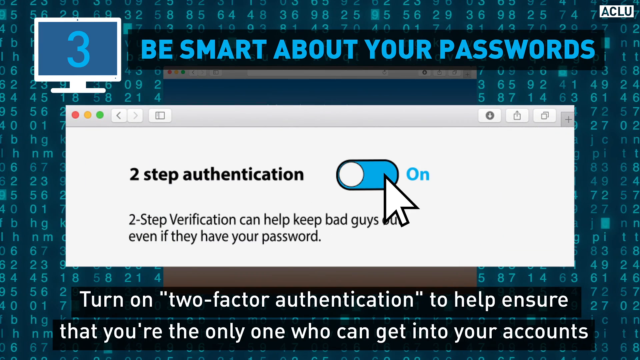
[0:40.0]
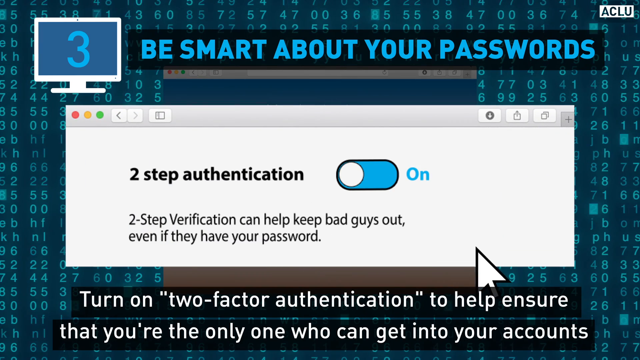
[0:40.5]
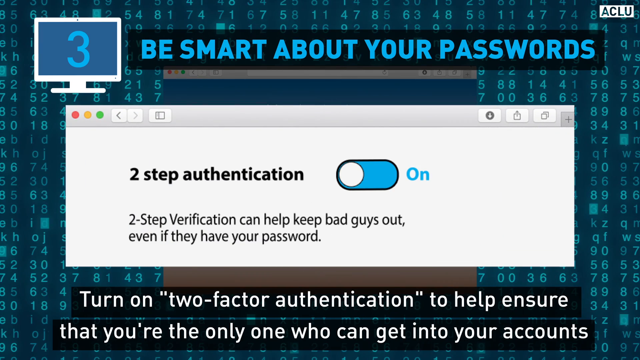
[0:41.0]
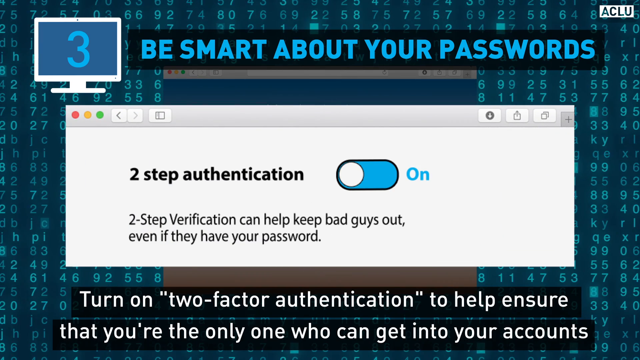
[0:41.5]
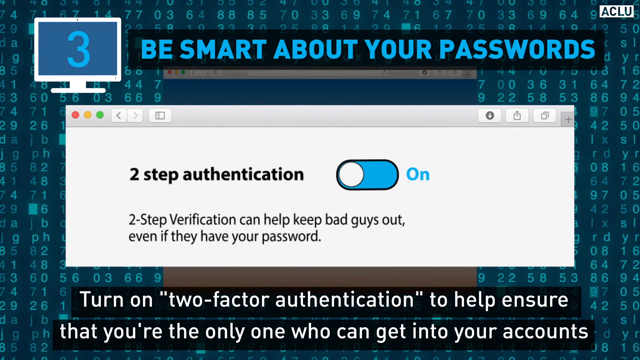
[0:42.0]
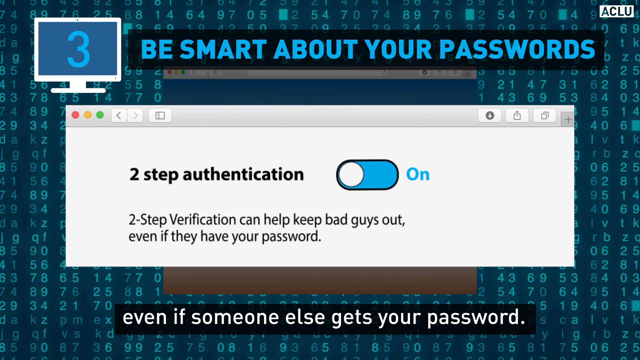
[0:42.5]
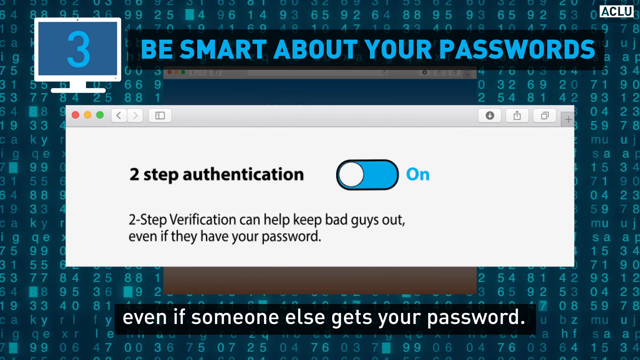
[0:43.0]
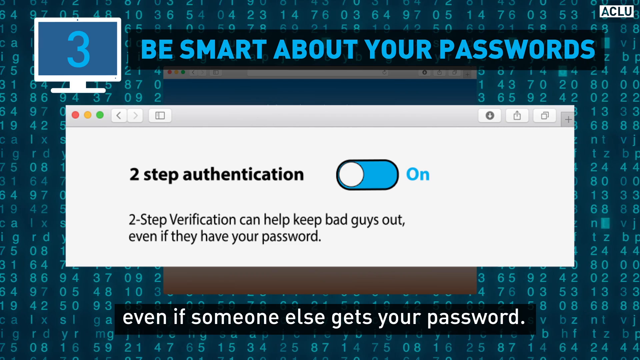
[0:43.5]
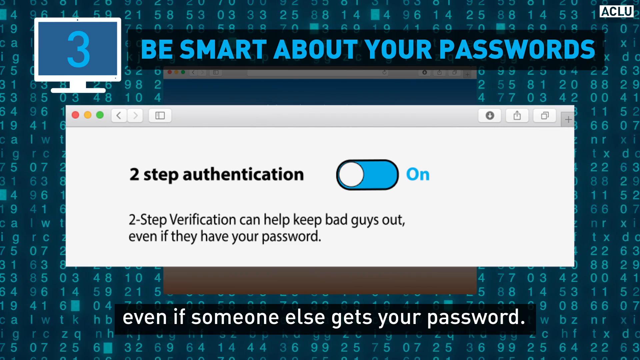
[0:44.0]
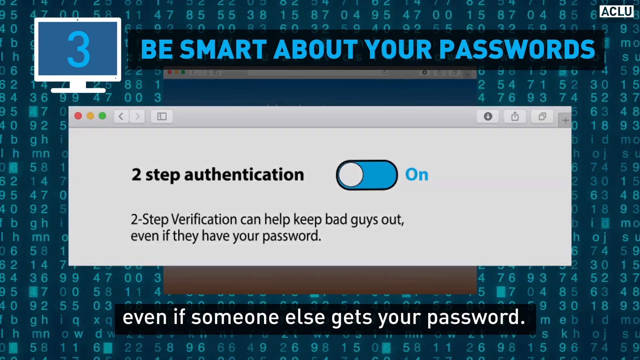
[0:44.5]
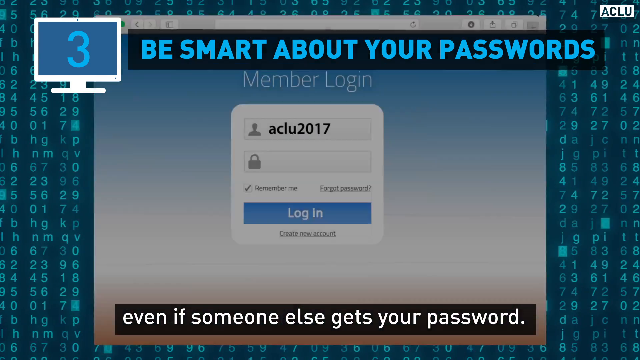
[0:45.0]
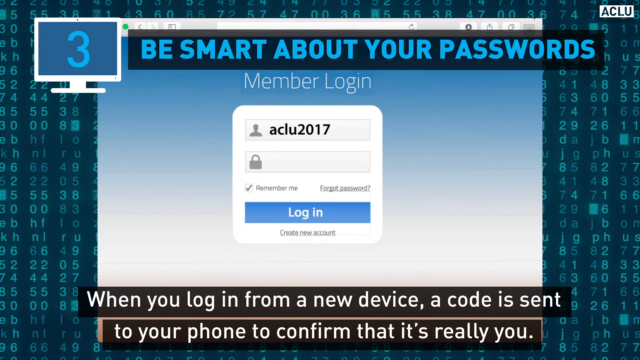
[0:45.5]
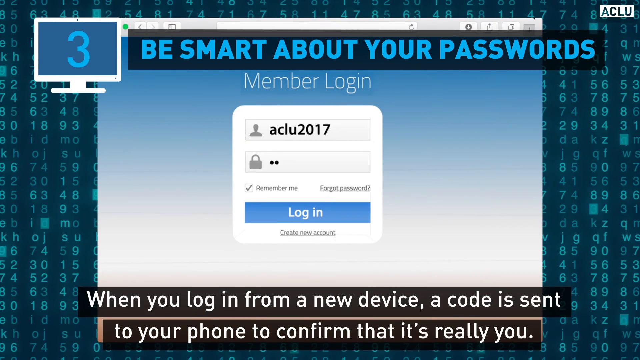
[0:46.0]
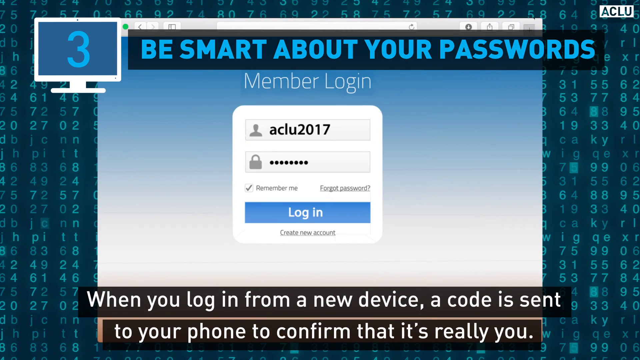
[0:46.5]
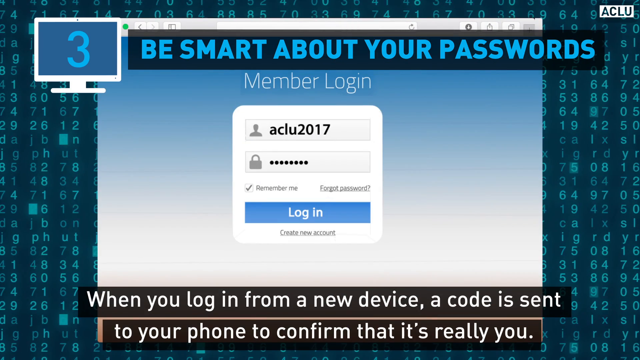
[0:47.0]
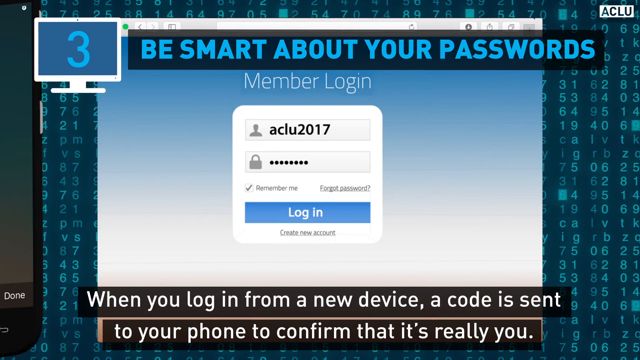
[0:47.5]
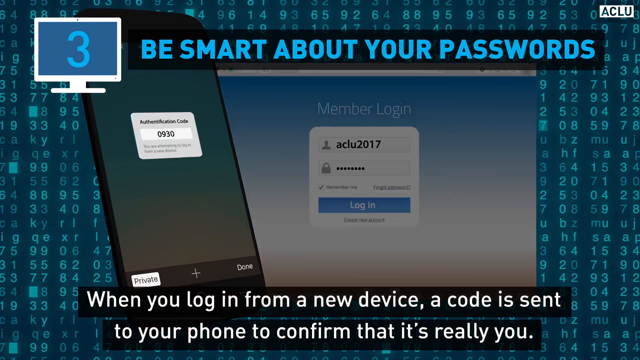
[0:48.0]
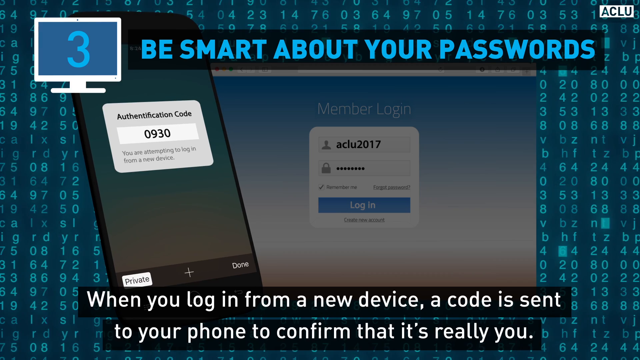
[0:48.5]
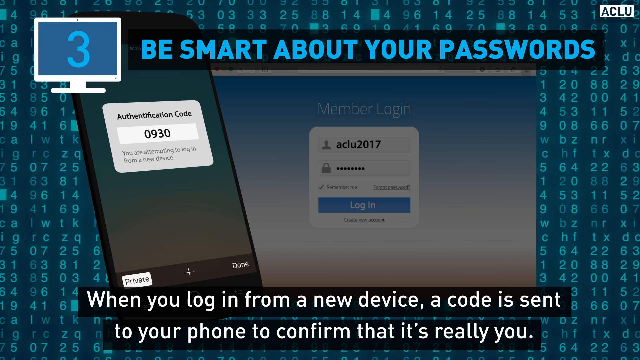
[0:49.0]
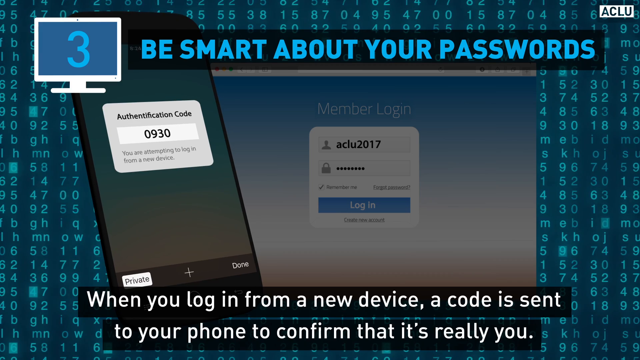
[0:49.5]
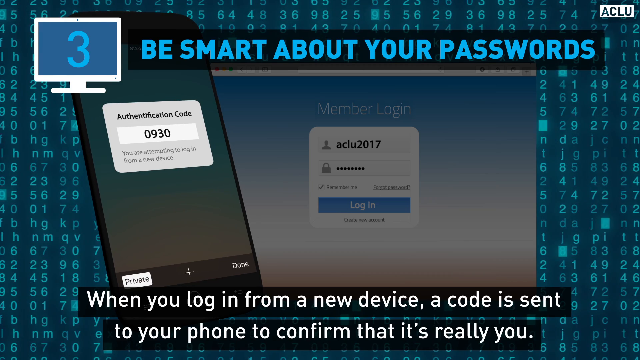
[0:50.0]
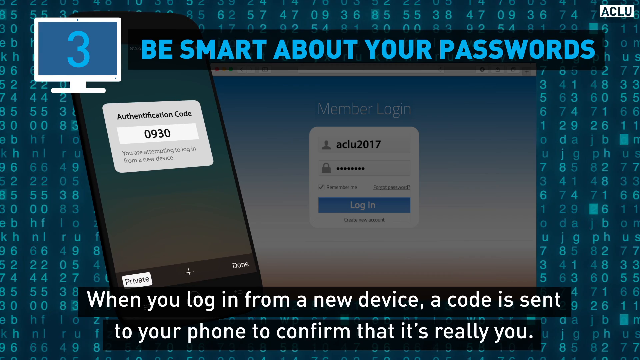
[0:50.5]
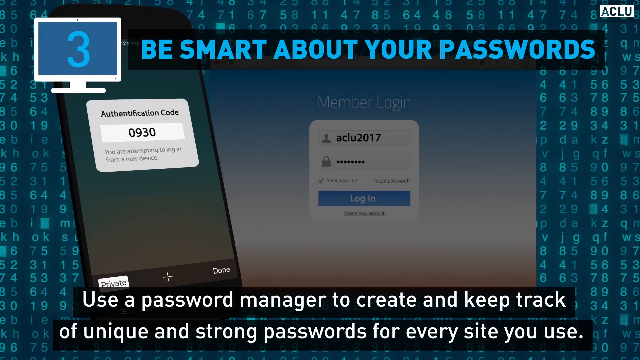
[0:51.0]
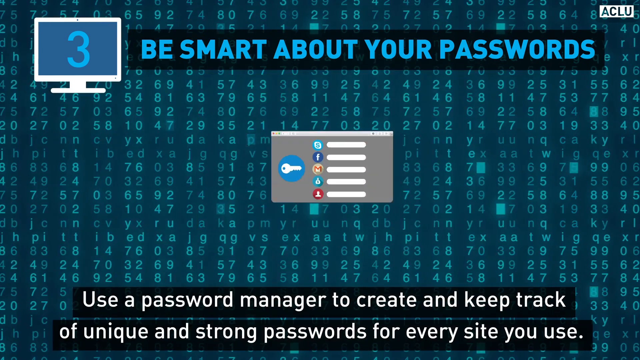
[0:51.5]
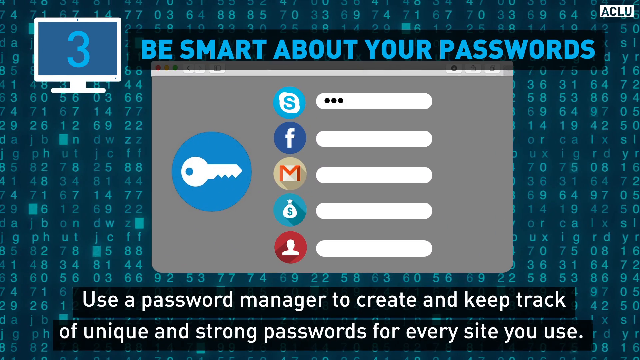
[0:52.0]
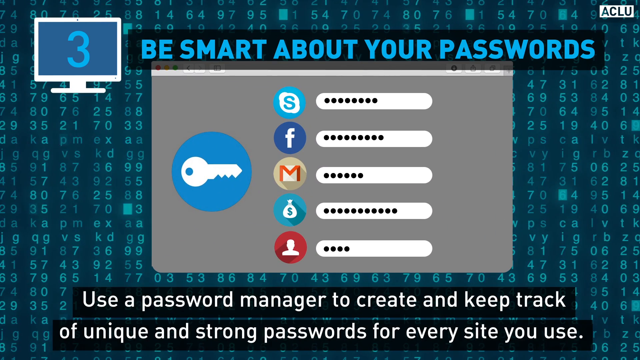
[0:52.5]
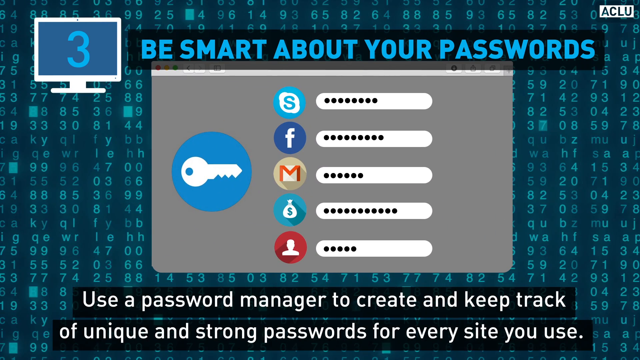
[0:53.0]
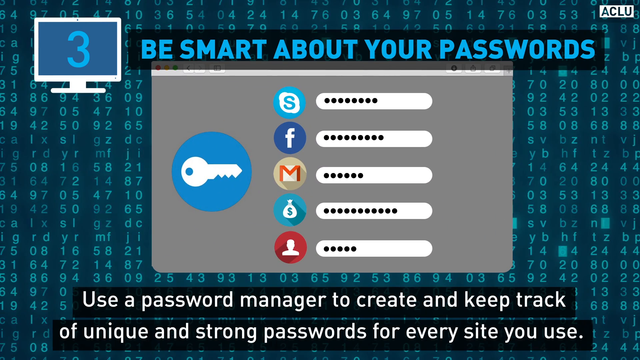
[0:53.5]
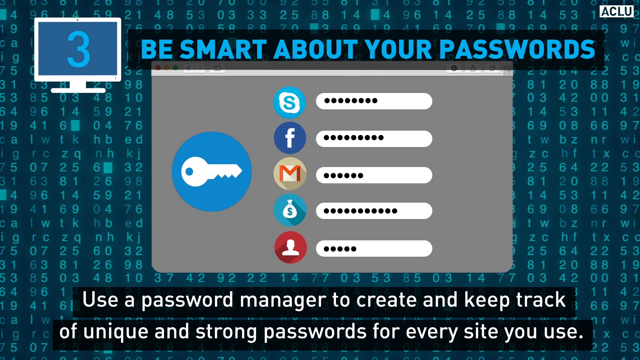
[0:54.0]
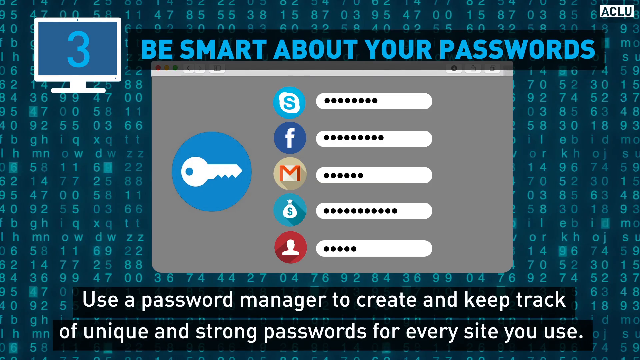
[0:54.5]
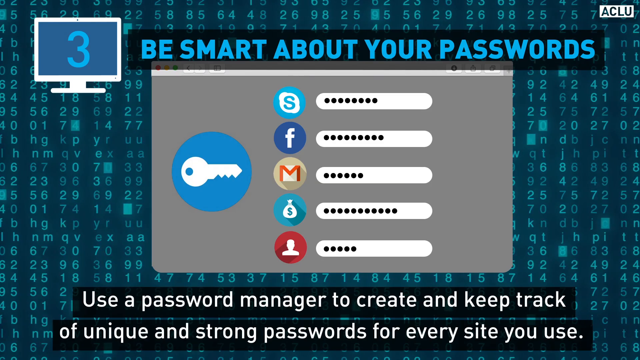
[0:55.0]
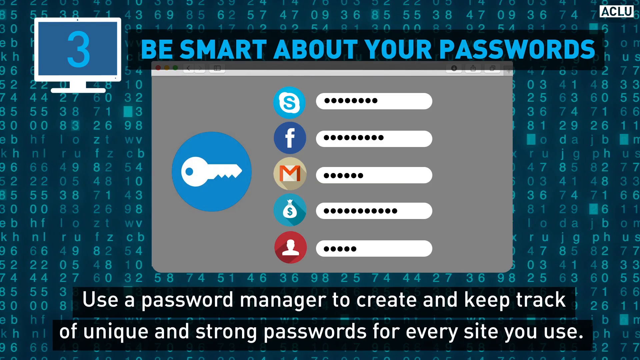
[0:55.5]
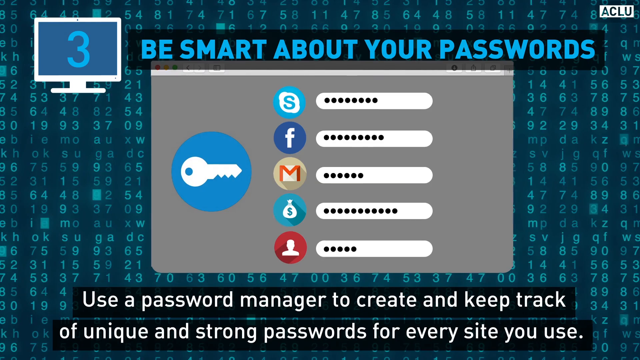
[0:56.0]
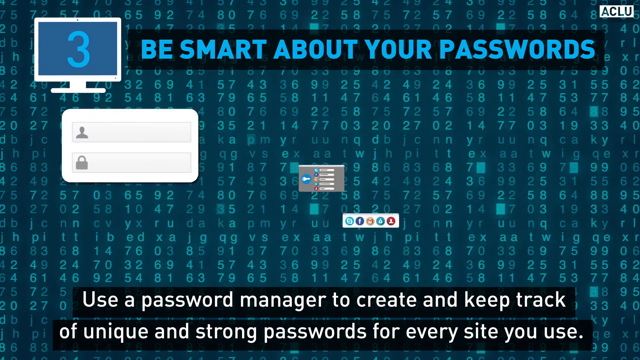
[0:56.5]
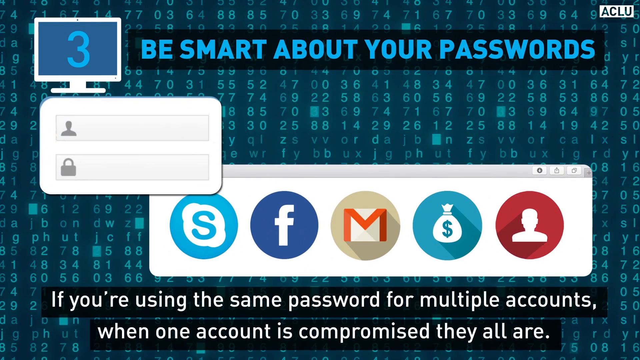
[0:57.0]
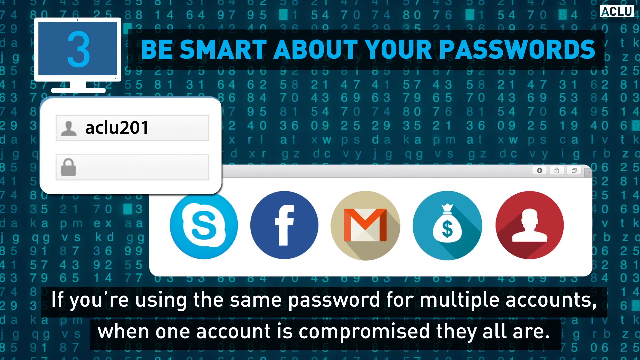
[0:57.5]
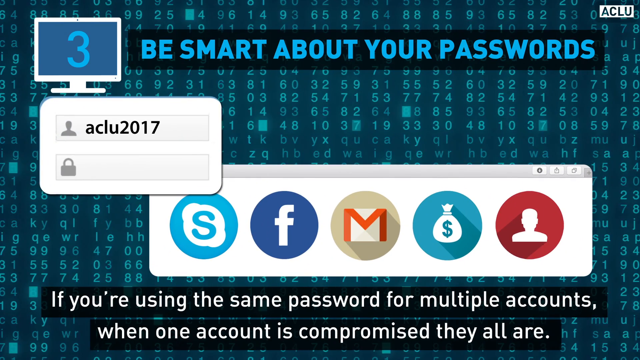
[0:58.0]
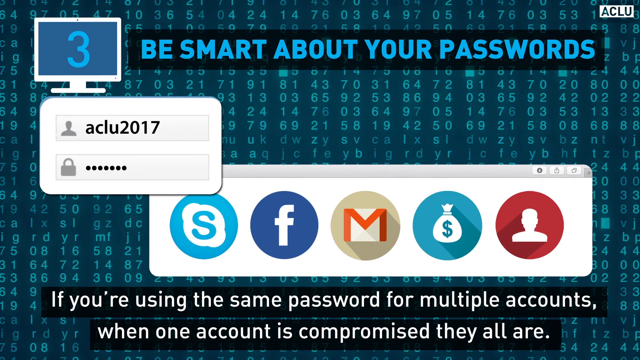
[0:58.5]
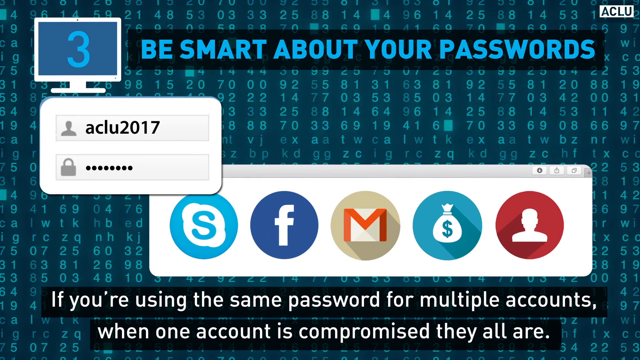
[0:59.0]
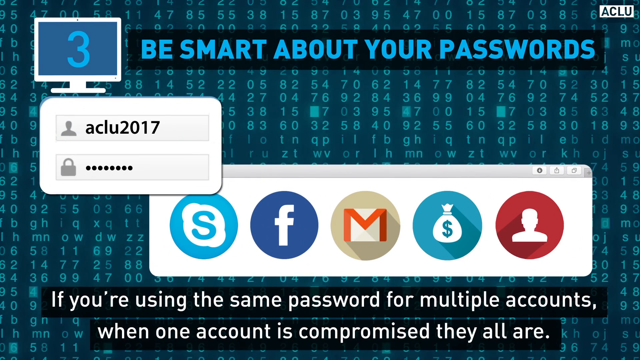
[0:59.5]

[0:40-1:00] The section begins with "be smart about your passwords" and shows how to activate two-step authentication. The example is the ACLU website, which has a member login with a username and password field. After two-step authentication is set up, clicking login sends an authentication code to a mobile phone, and that code is entered into the website. The text then reads "use a password manager to create and keep track of unique and strong passwords for every site you use," with examples such as Salesforce, Slack, Facebook, Google Mail and other sensitive websites. The video then returns to showing how this works for specific passwords, with "ACLU 2017", a password input field and five icons on a browser.